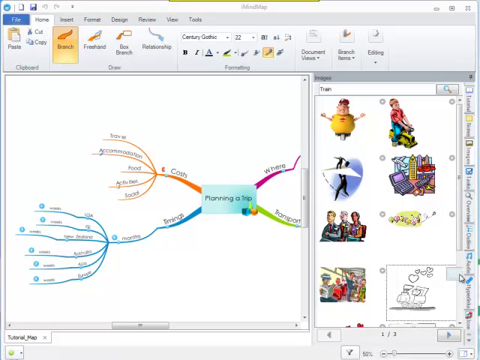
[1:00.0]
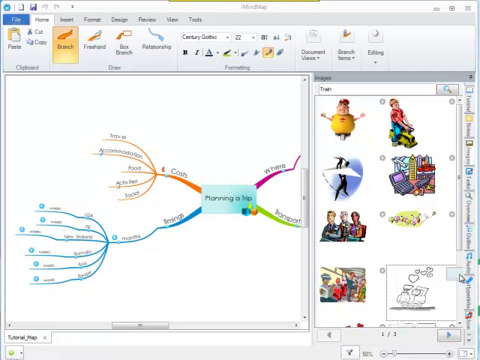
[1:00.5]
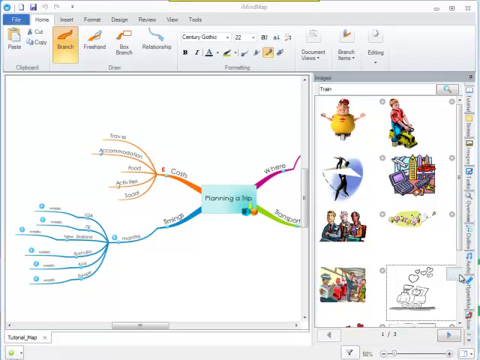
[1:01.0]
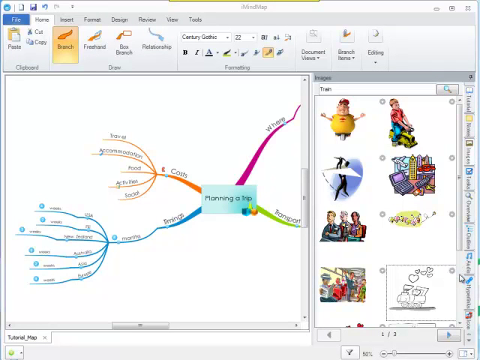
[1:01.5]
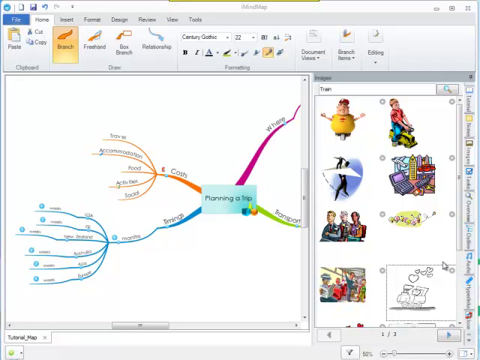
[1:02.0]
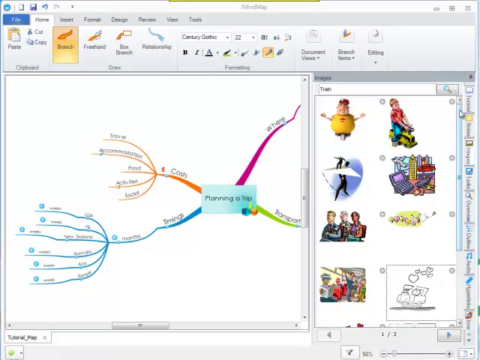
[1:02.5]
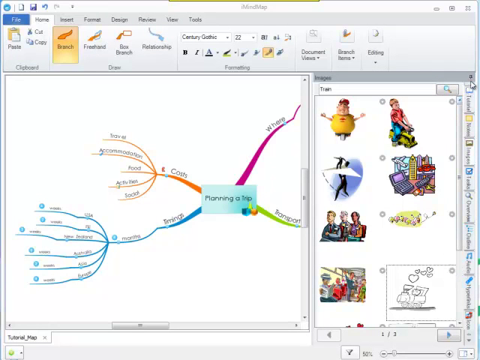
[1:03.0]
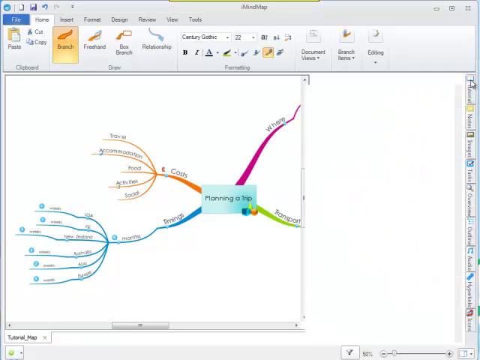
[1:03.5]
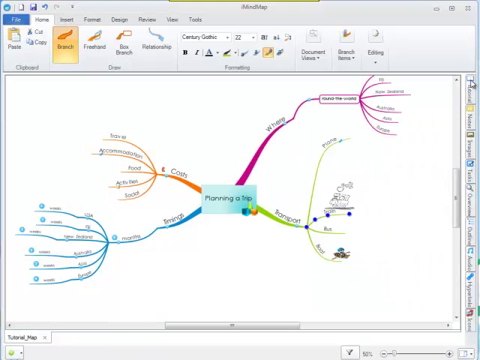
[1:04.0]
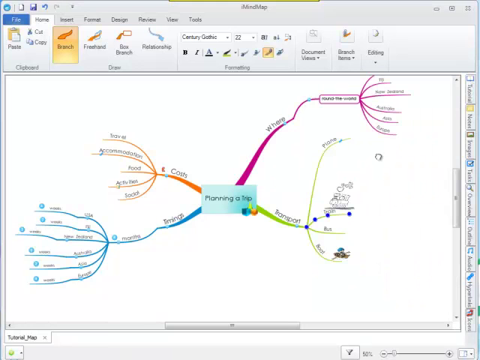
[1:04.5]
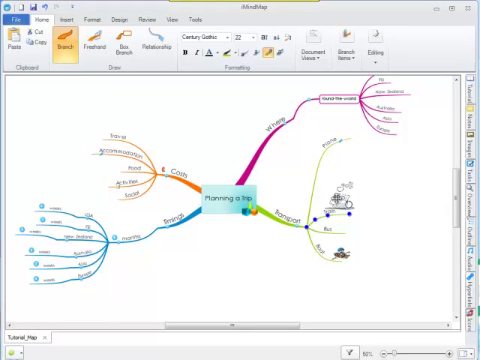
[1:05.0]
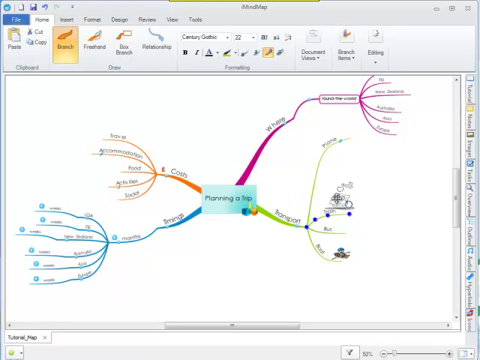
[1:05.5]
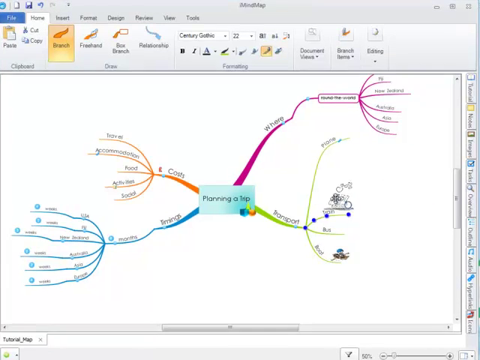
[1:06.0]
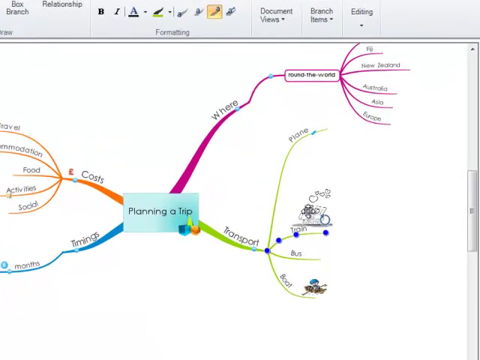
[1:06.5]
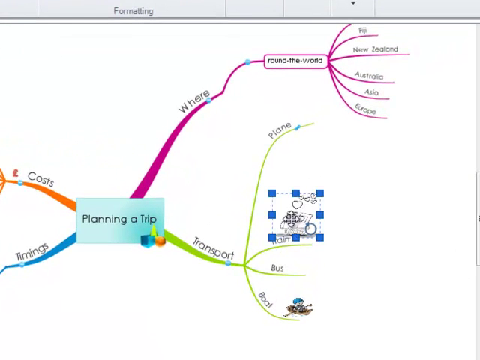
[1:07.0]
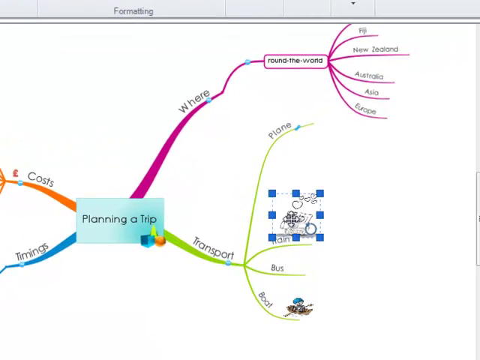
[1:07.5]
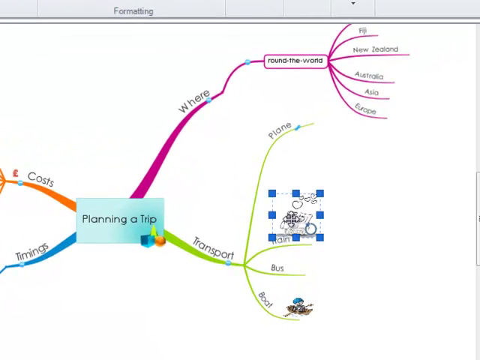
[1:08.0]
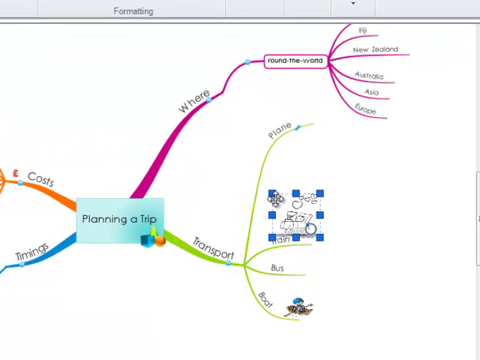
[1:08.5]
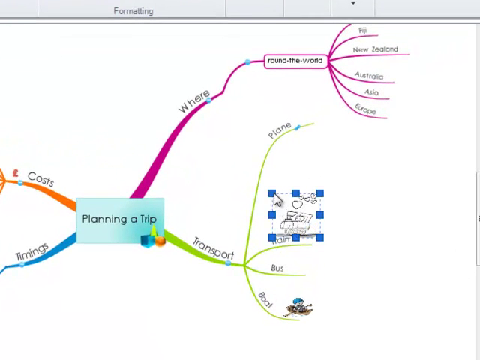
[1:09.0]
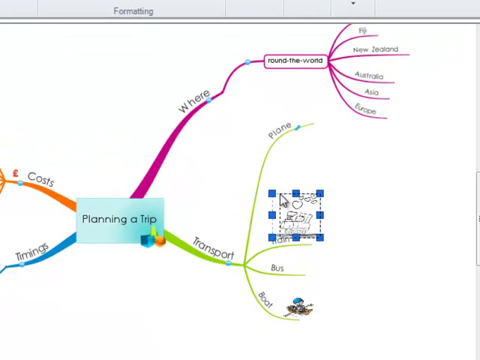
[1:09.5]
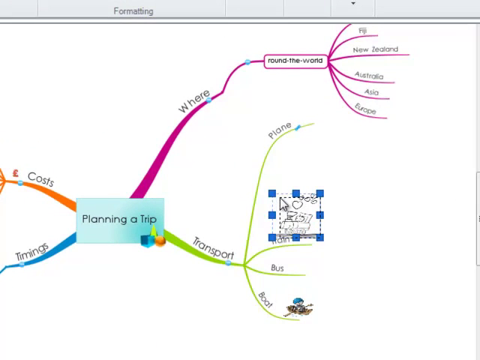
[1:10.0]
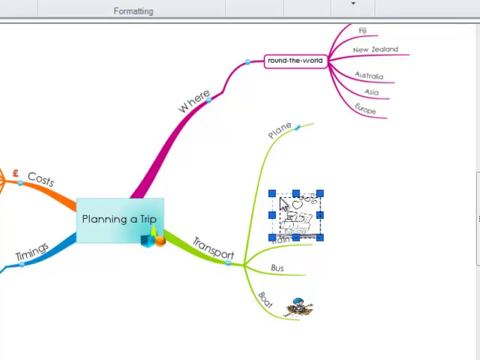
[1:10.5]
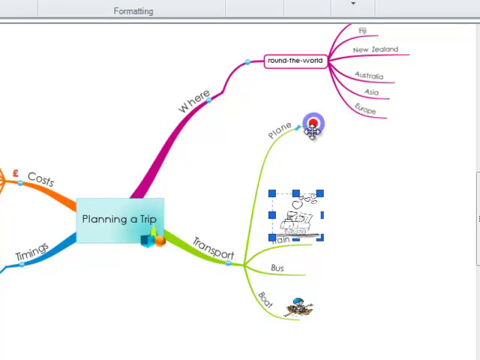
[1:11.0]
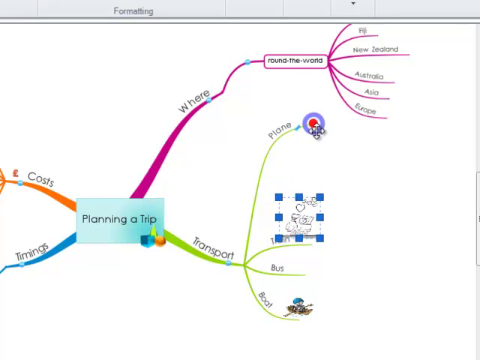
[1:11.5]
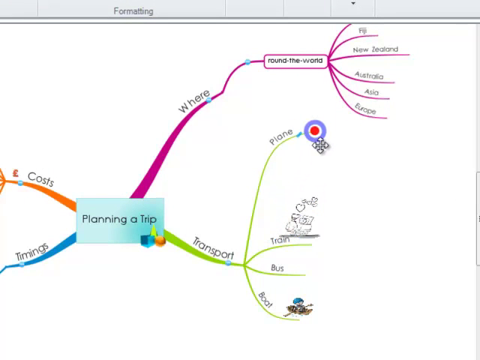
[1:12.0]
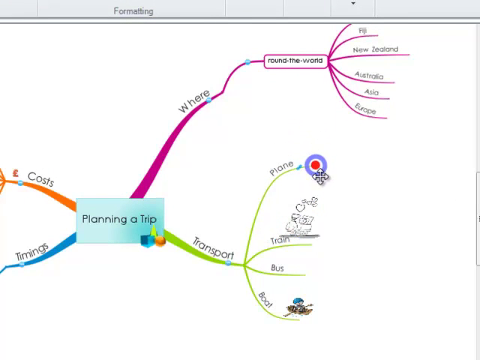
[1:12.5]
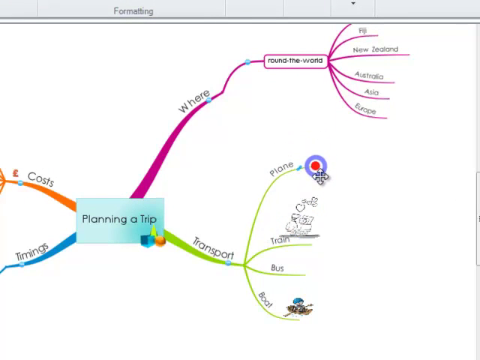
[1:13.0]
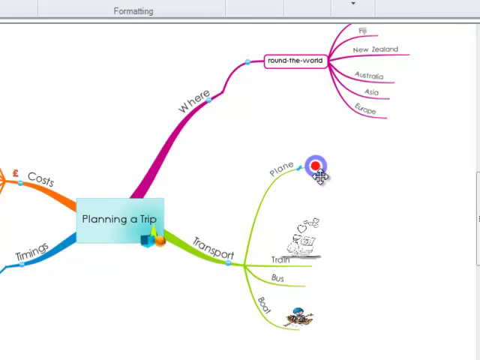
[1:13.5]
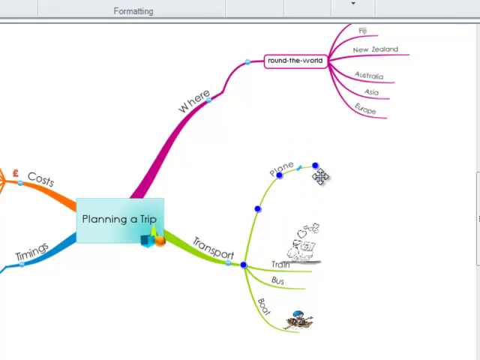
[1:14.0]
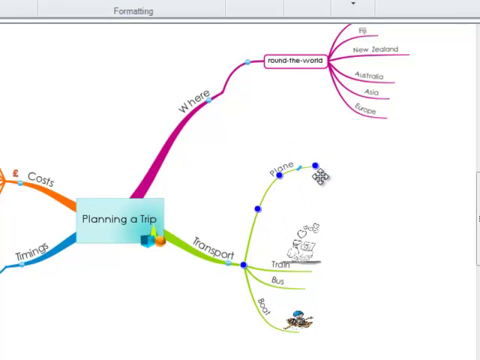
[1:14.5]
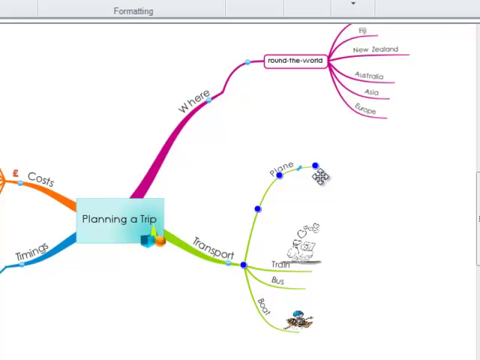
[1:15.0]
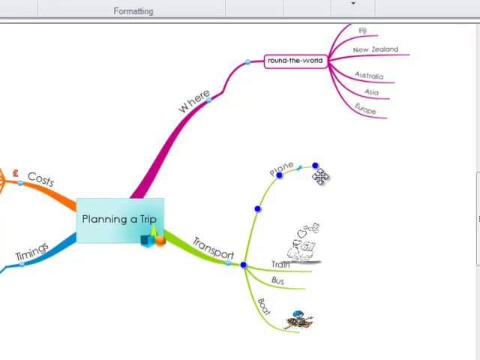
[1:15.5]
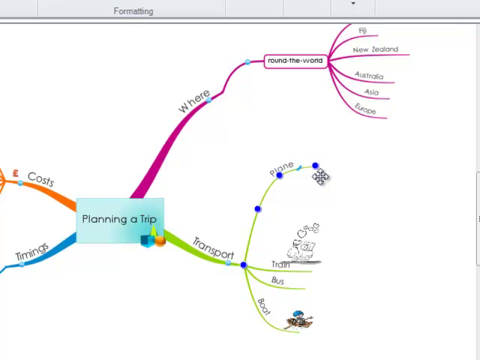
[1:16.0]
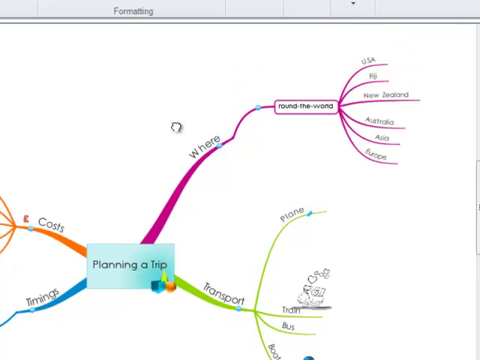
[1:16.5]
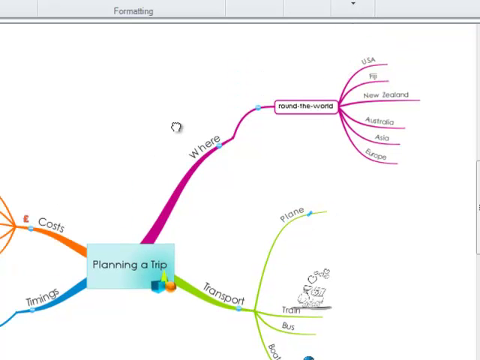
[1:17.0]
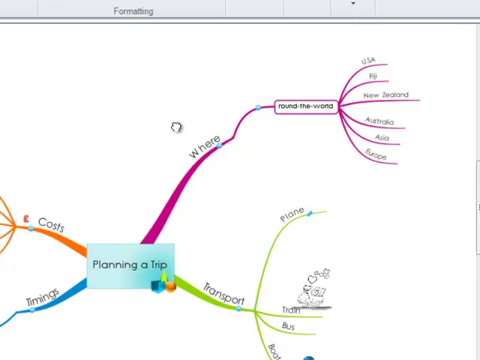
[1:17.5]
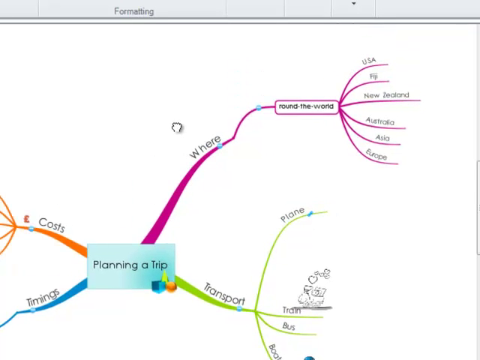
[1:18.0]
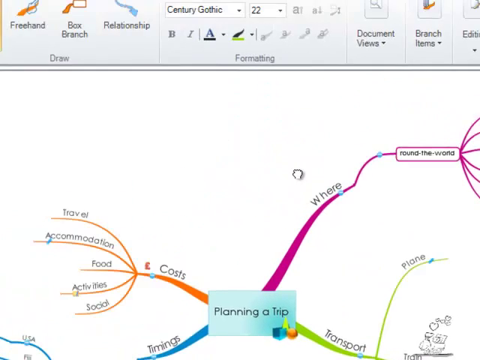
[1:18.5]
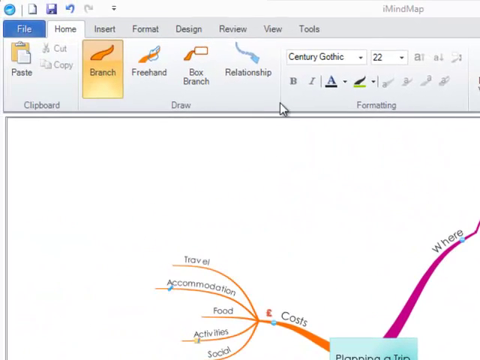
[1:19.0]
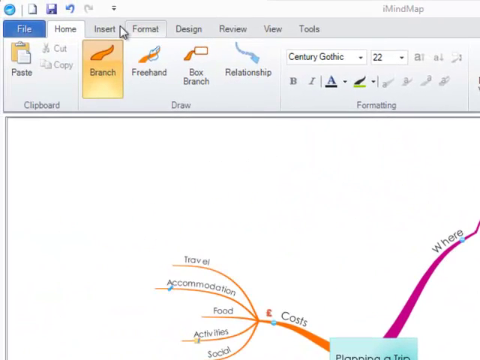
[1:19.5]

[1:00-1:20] The view zooms in on the transport branch, which lists four modes of transport: plane, train, bus and boat. Another branch says "where" and mentions the world, showing around the world, with subsections for Europe, Asia, Australia and New Zealand, apparently continents and other countries. There is also a blue section labelled "timings" and an orange one labelled "costs". The cursor goes to the top and clicks on insert. The green line with the word "plane" has four blue dots and is shrunk.